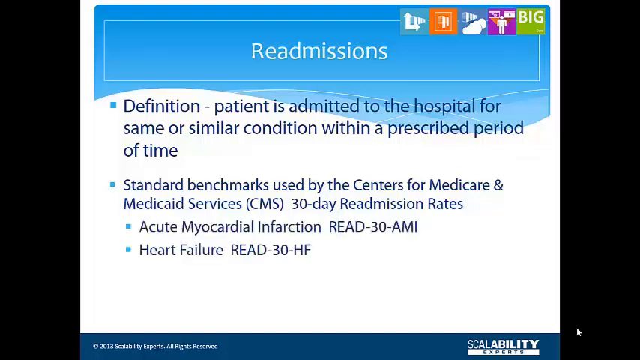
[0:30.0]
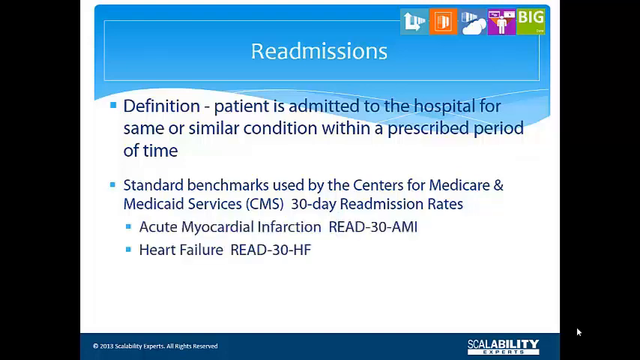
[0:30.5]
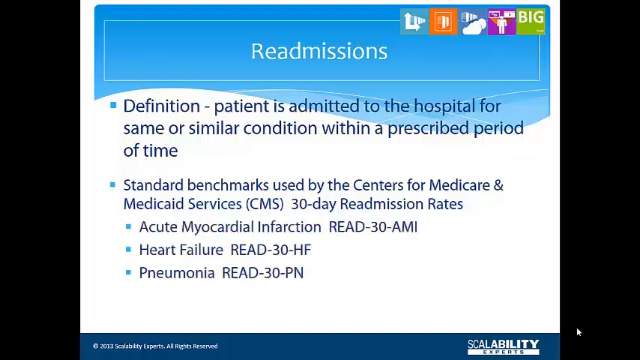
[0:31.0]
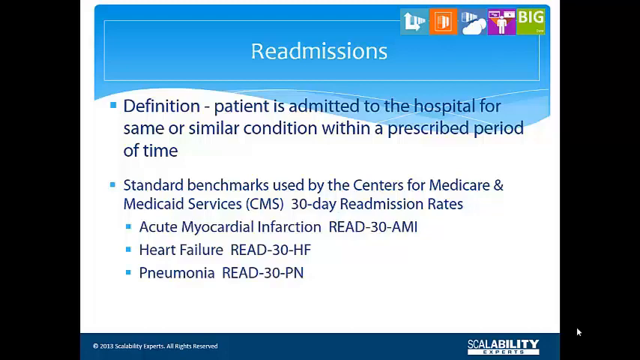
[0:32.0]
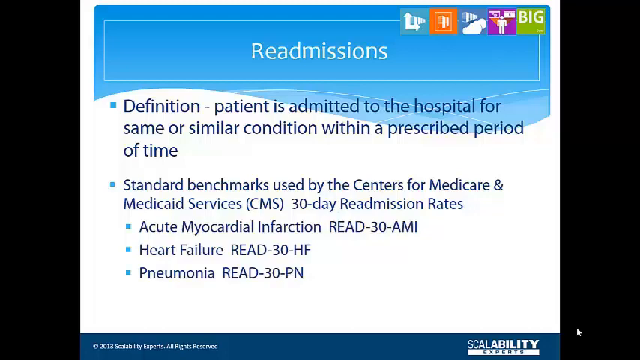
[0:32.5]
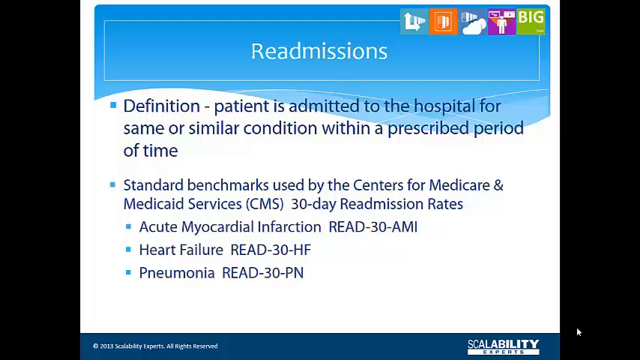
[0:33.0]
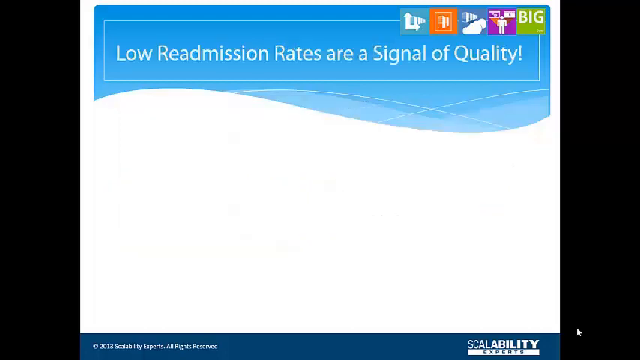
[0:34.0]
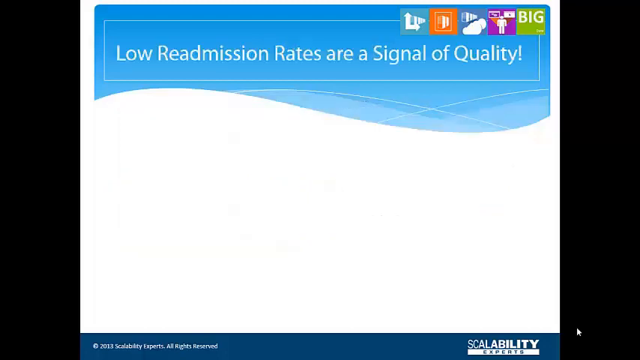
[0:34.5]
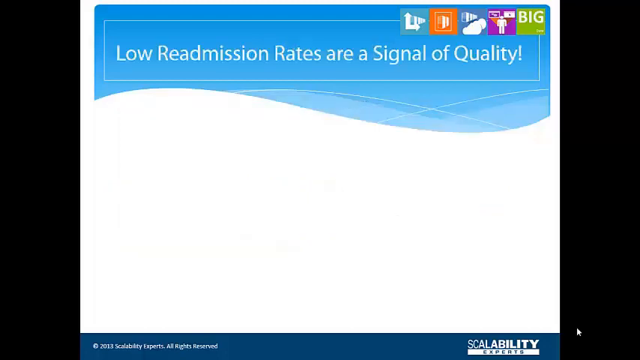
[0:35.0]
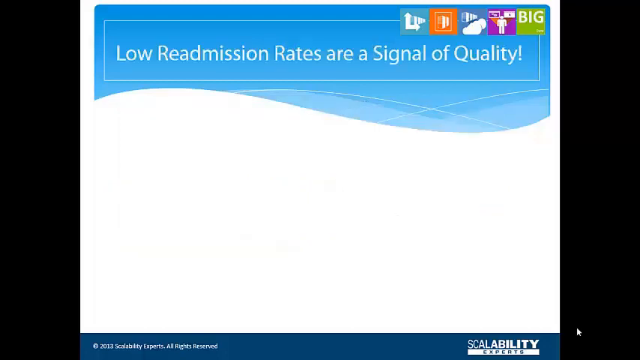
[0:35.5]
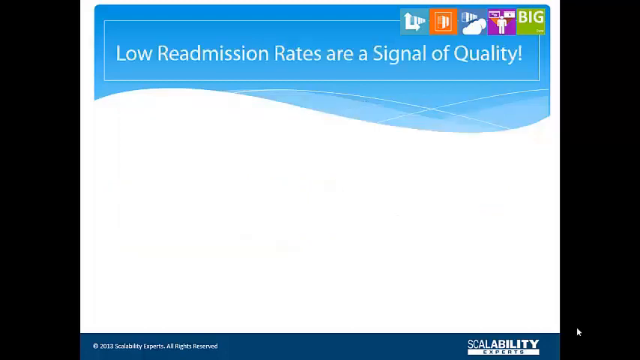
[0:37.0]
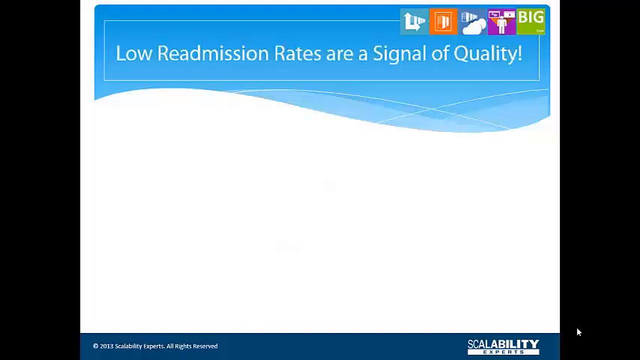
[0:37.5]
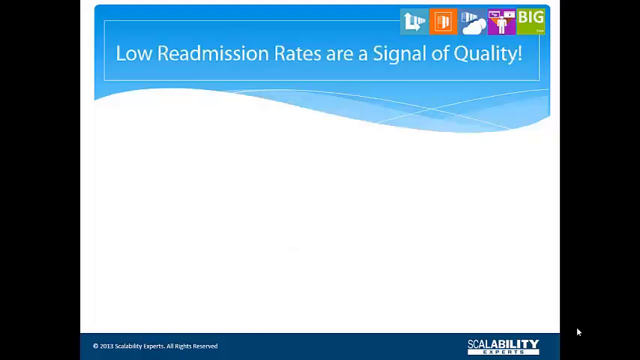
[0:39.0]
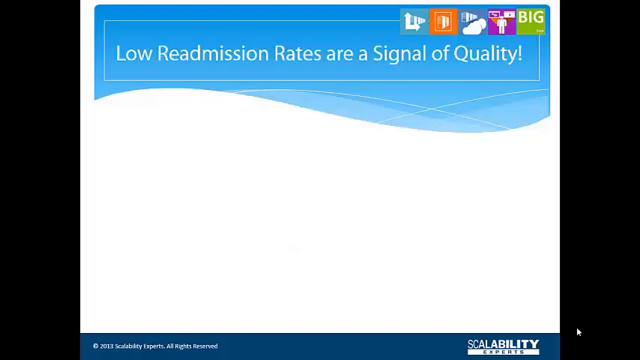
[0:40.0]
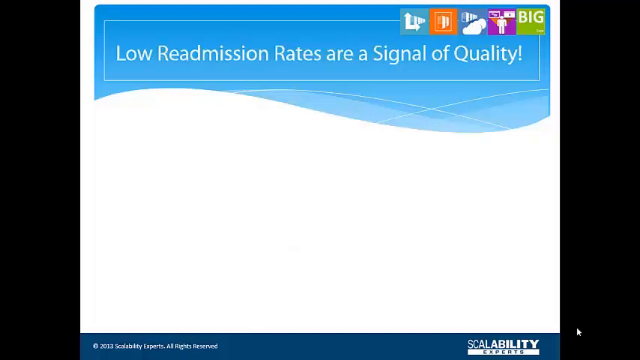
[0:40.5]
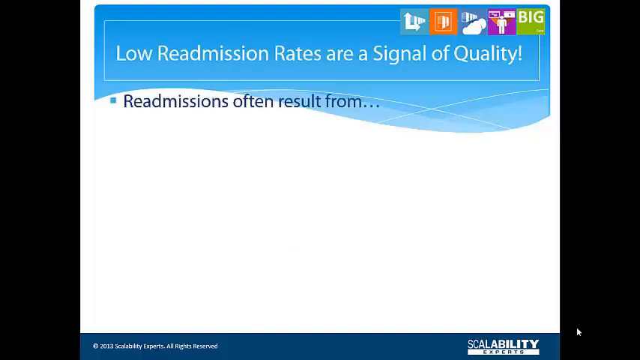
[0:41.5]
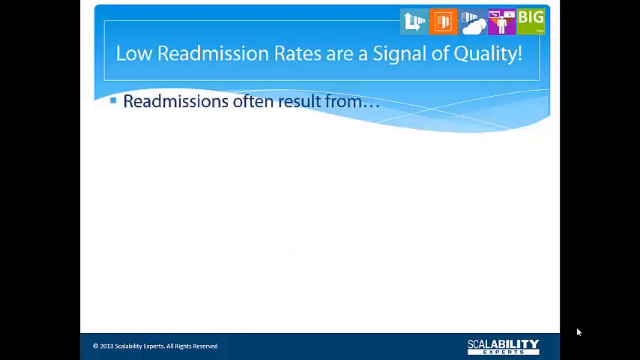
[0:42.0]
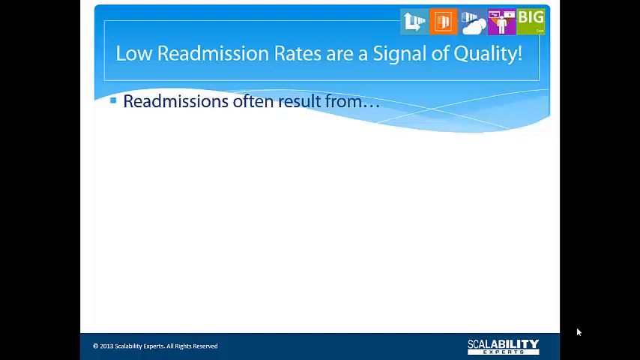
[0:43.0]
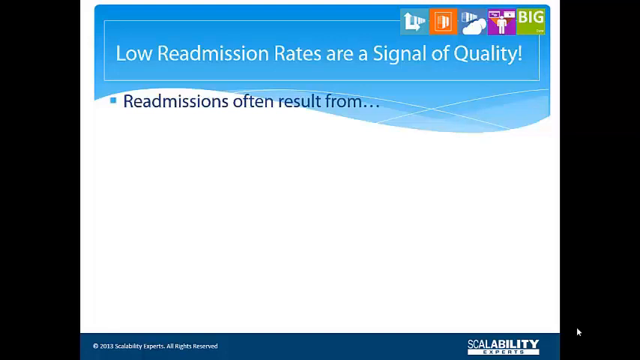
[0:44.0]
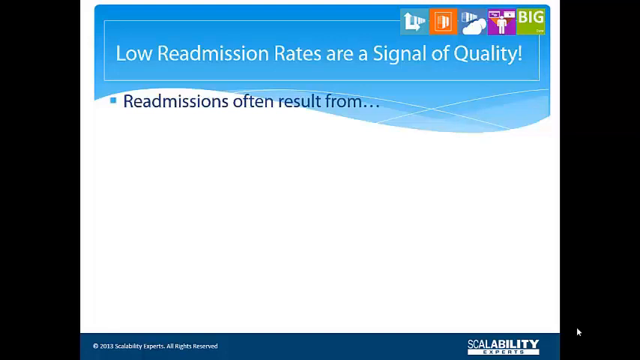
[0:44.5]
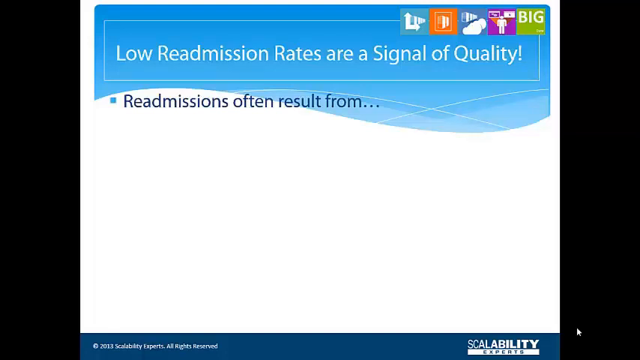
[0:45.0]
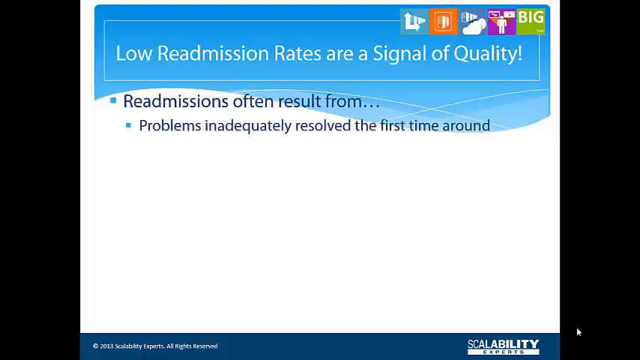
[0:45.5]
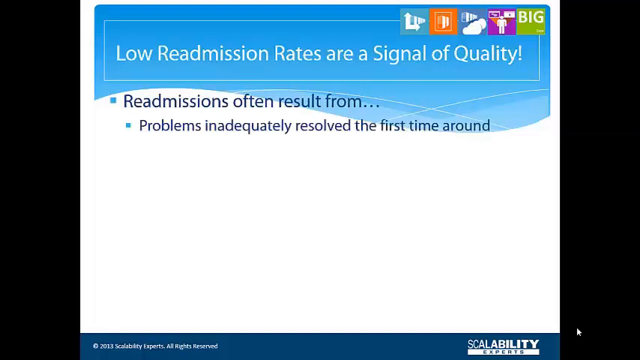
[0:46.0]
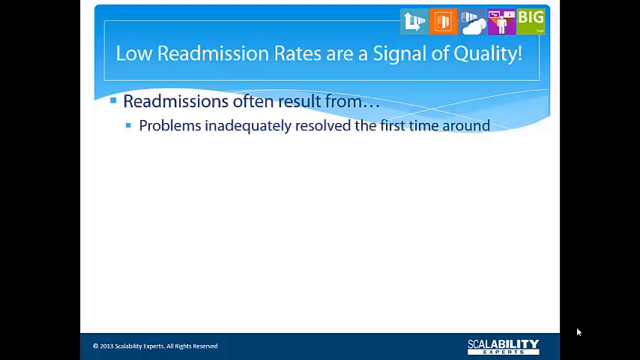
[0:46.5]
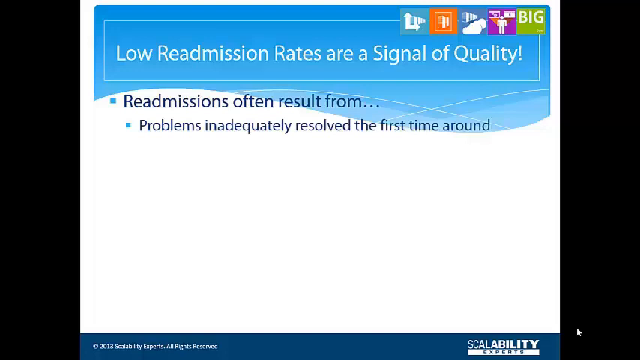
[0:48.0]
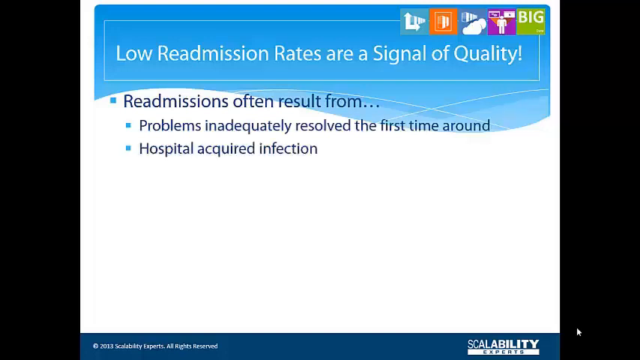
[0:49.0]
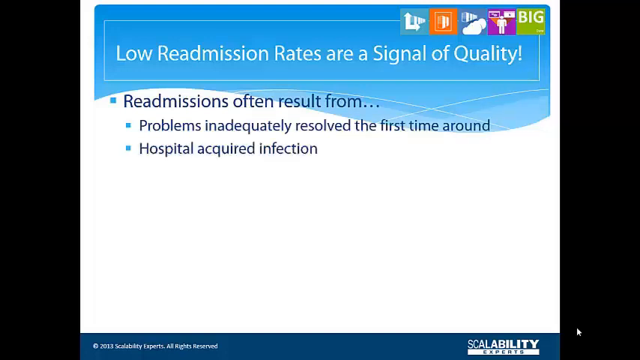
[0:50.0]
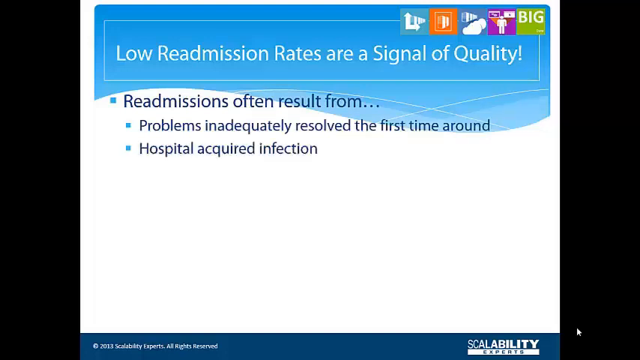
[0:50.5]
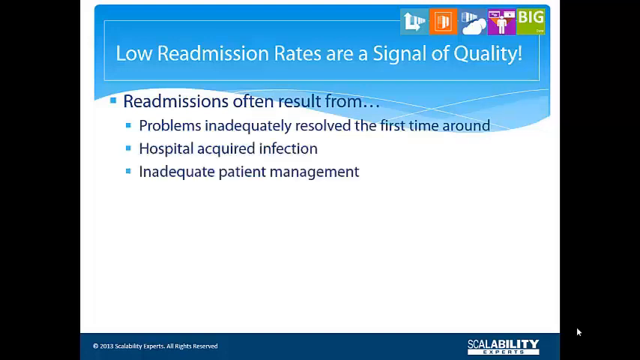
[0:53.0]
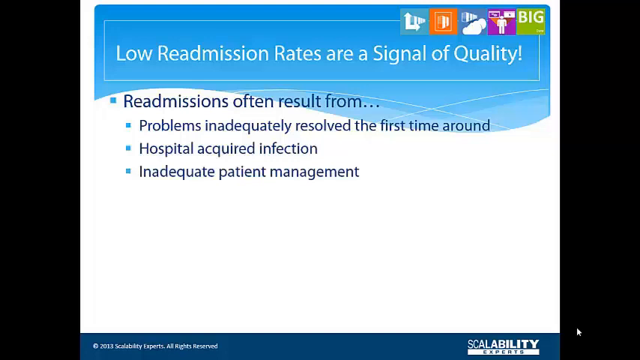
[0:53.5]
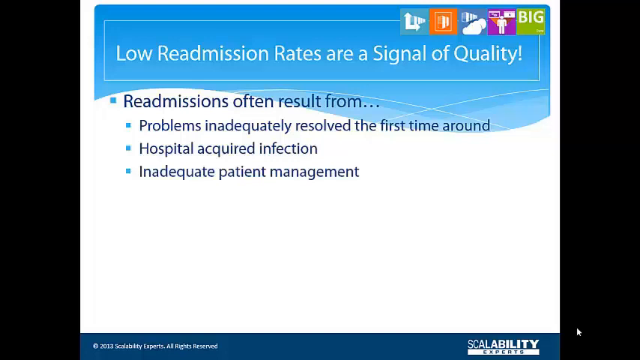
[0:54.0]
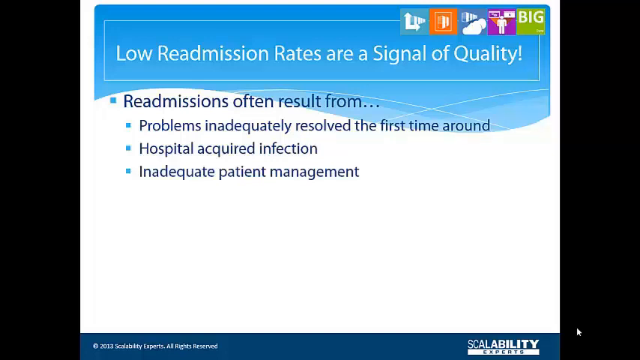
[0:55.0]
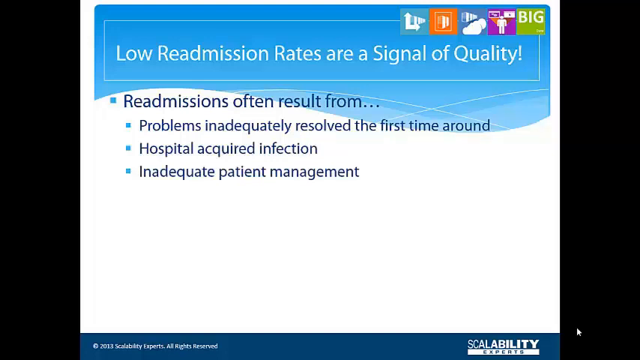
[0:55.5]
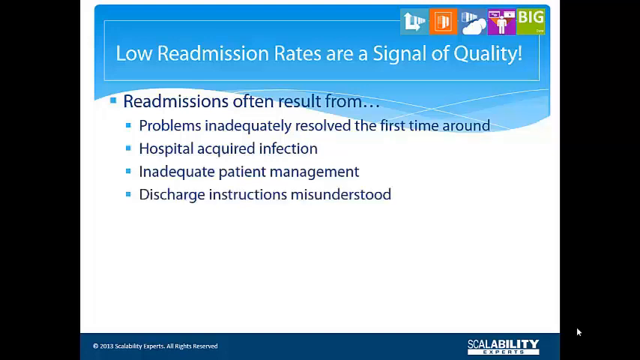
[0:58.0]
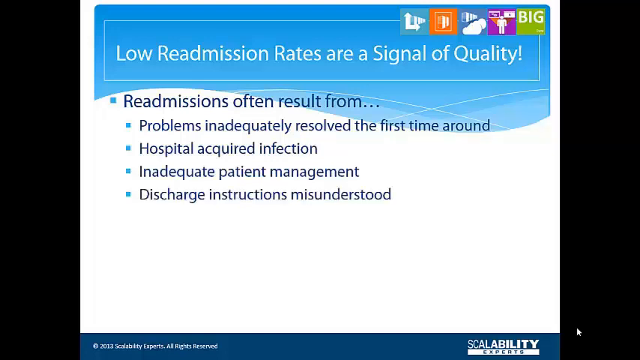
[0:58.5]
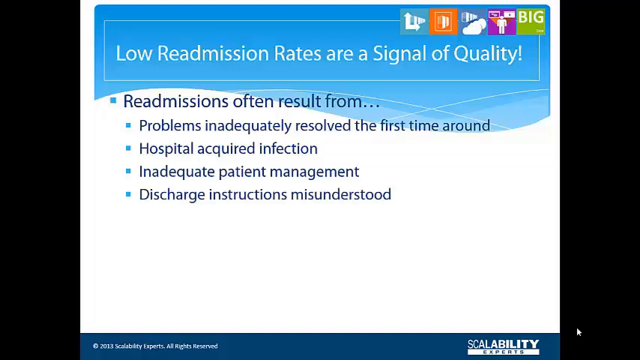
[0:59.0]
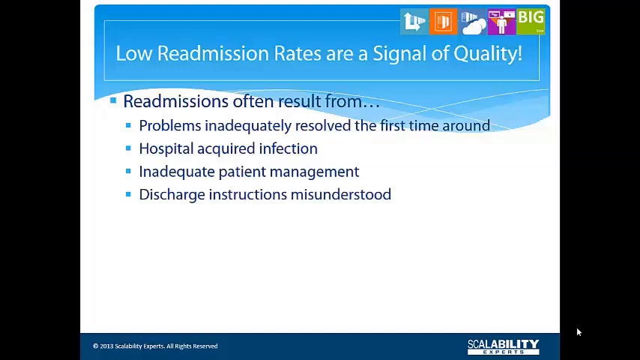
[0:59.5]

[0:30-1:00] A white background has a blue banner with white text reading "readmissions." Icons are in the top right corner, and text at the bottom of the screen reads "scalability." Bullets, some with sub-bullets beneath them, appear in blue text: "definition. Patient is admitted to the hospital for same or similar condition within a prescribed period of time. Recorded benchmarks used by the Centers for Medicare and Medicaid Services, CMS, 30 day readmission rates, acute myocardial infarction, read 30 AMI, heart failure, read 30 HF." "Pneumonia read 30 PN" then pops up. The screen transitions to another with a blue banner at the top in white text reading "low readmission rates are a signal of quality." Bullets pop up reading "readmissions often result from...", "problems inadequately resolved the first time around," "hospital acquired infection," "inadequate patient management," and "discharge instructions misunderstood."